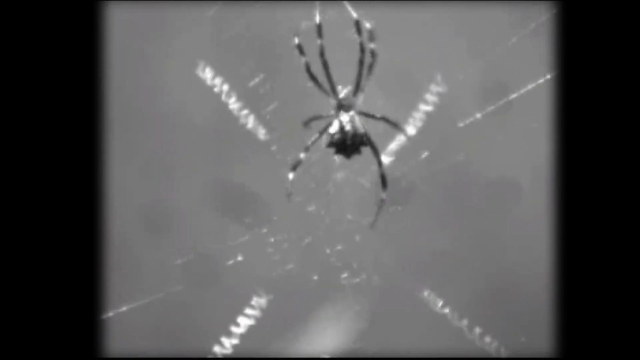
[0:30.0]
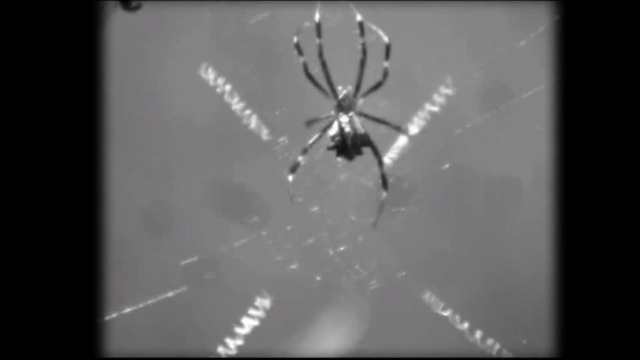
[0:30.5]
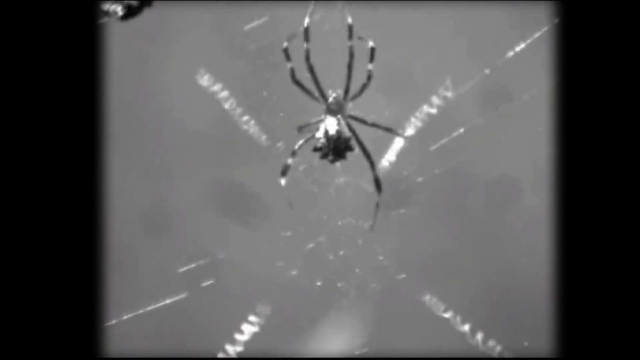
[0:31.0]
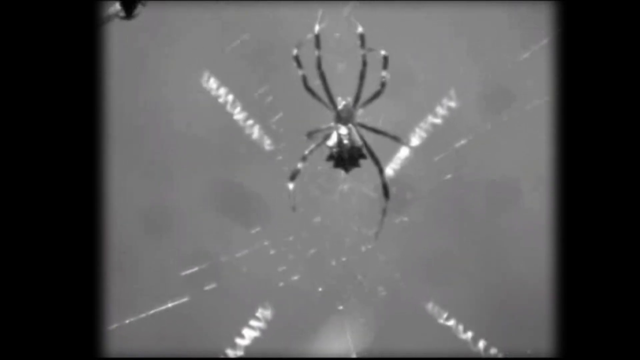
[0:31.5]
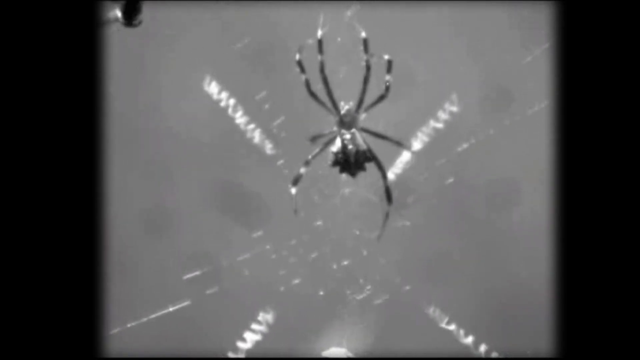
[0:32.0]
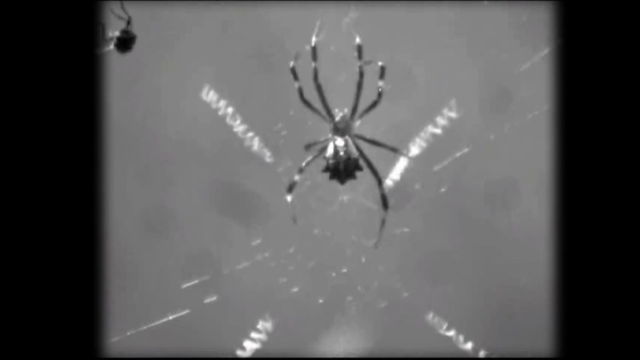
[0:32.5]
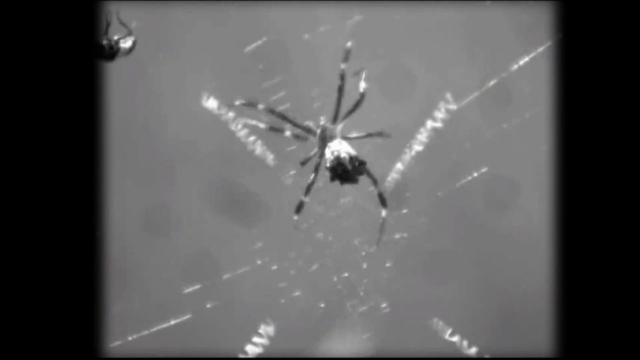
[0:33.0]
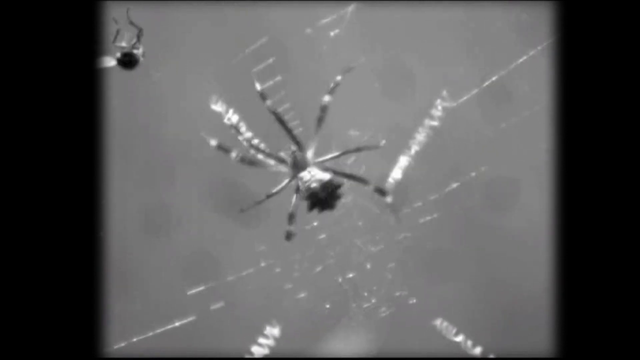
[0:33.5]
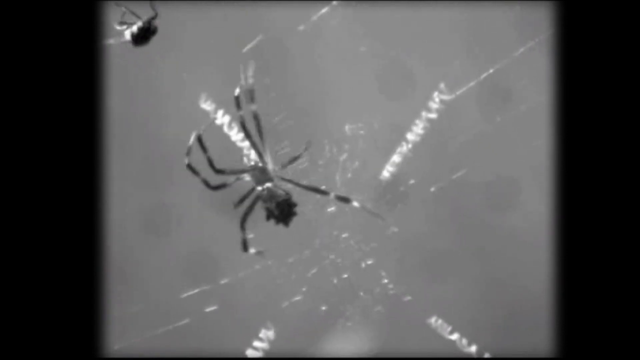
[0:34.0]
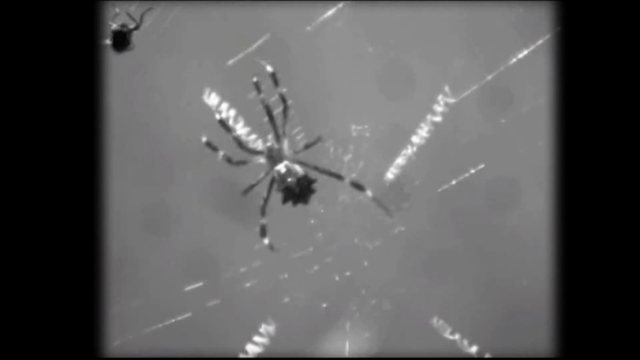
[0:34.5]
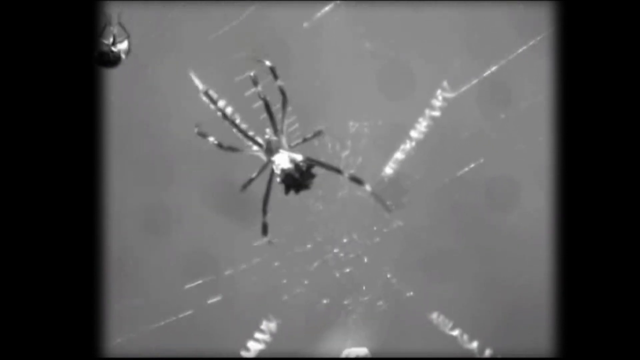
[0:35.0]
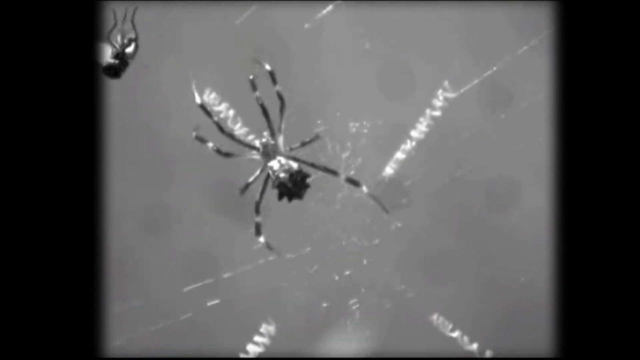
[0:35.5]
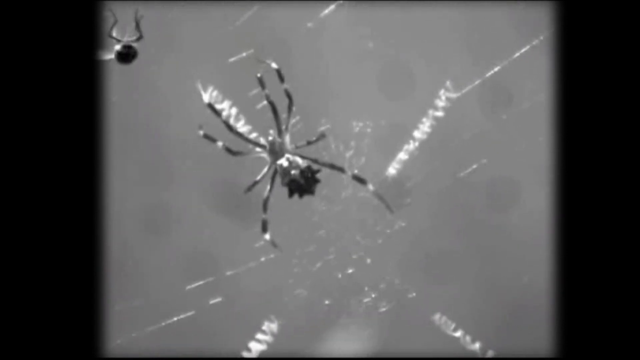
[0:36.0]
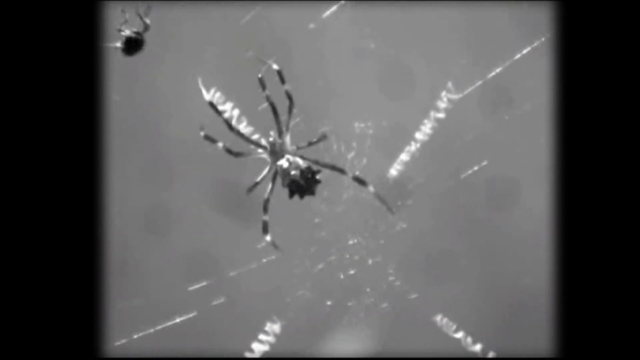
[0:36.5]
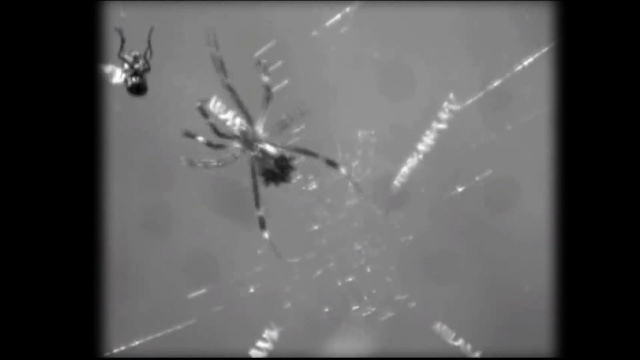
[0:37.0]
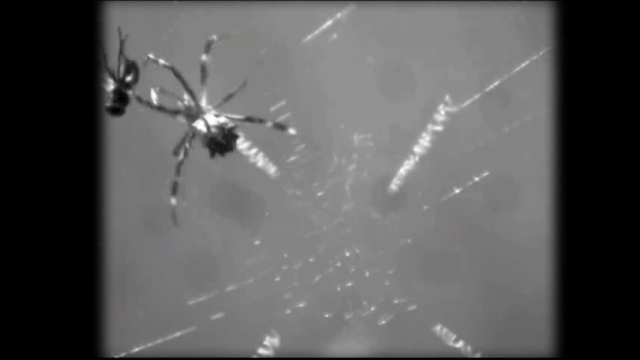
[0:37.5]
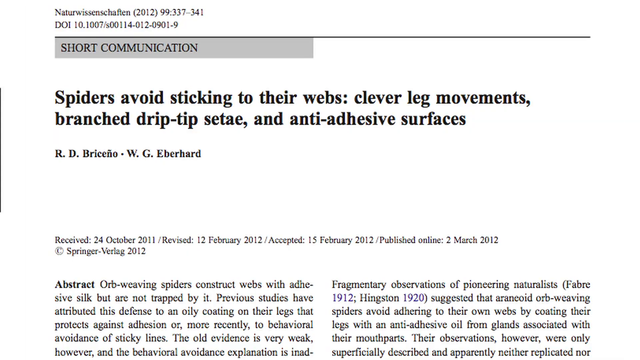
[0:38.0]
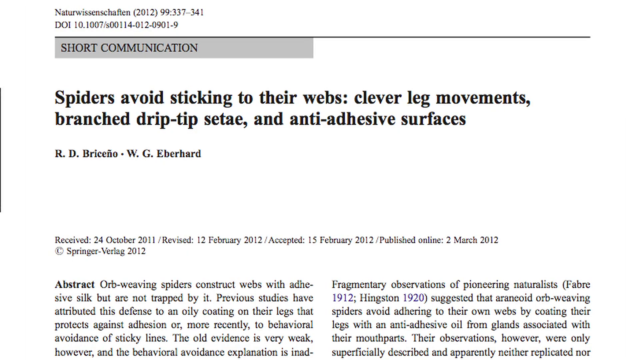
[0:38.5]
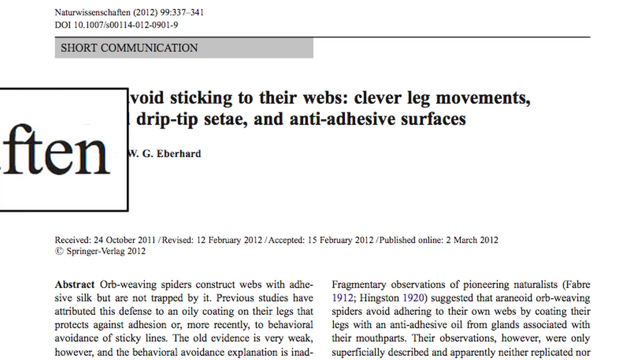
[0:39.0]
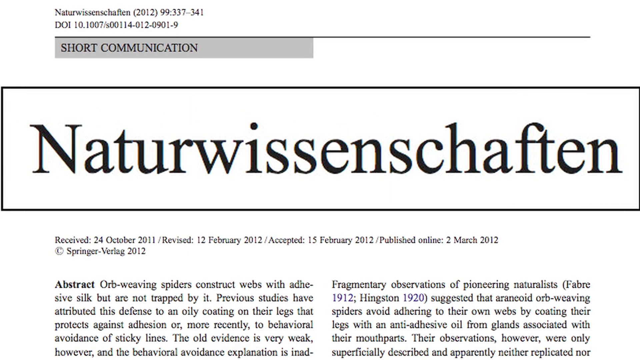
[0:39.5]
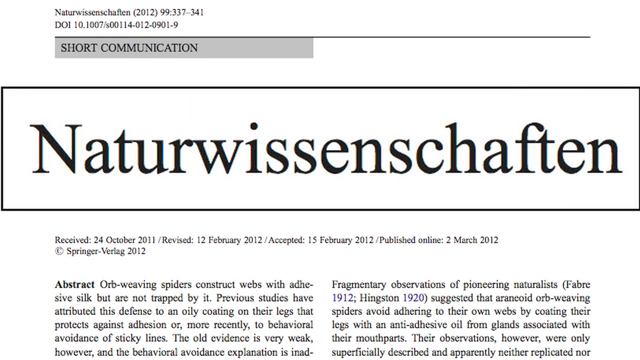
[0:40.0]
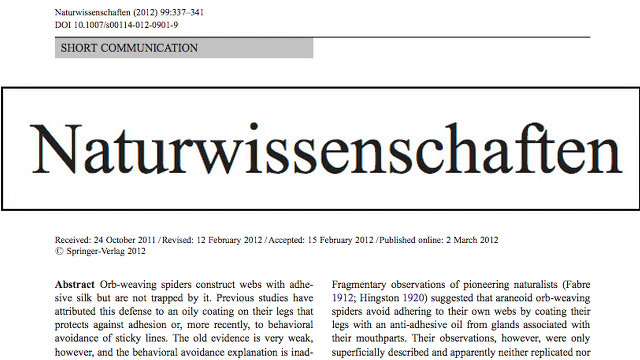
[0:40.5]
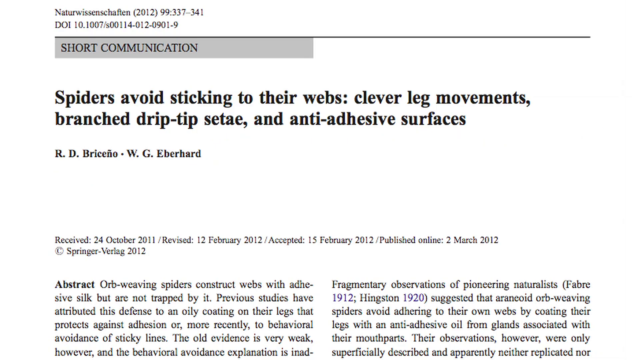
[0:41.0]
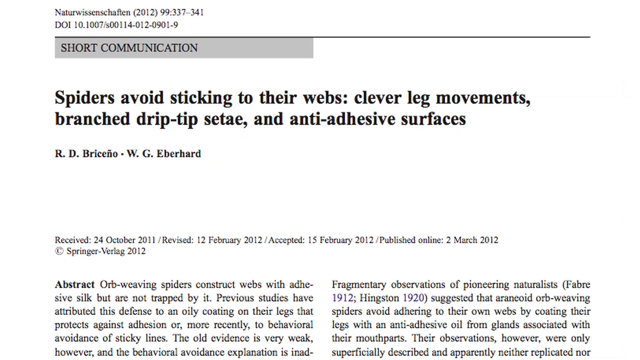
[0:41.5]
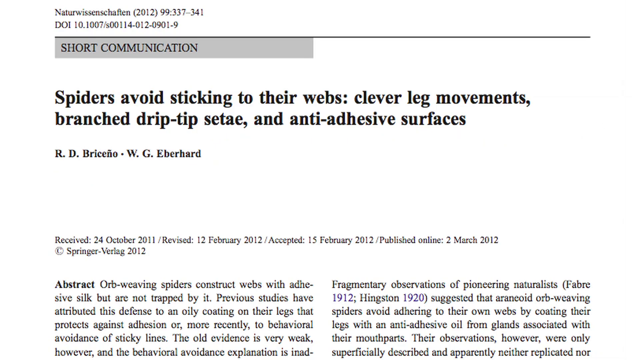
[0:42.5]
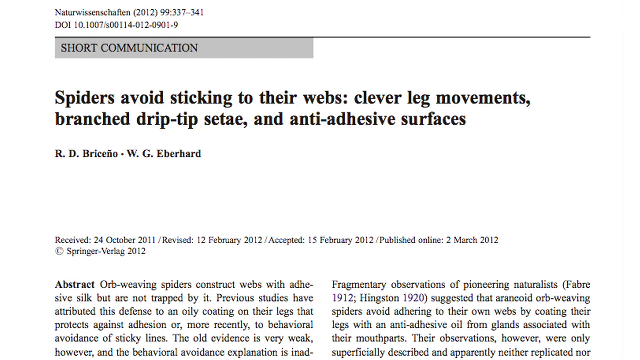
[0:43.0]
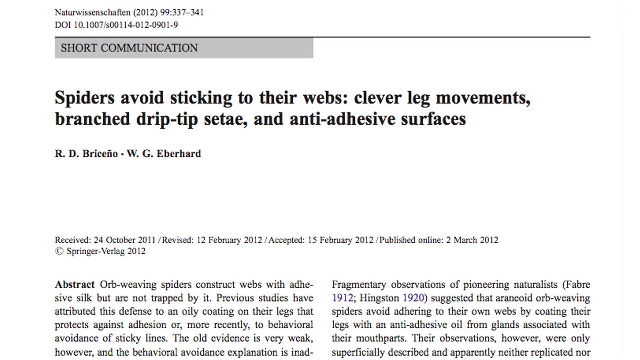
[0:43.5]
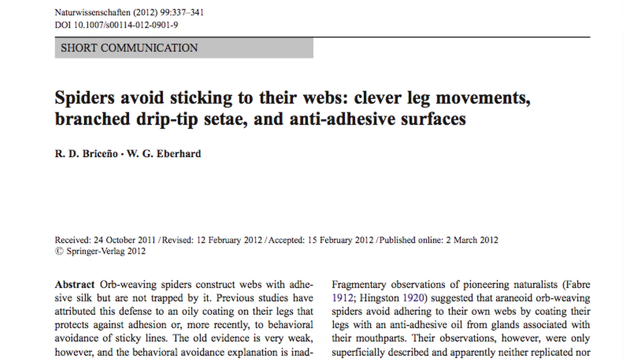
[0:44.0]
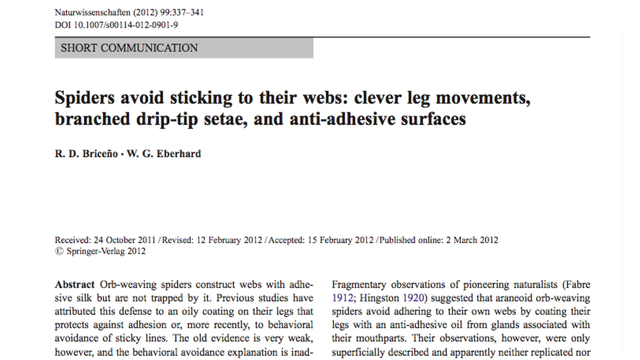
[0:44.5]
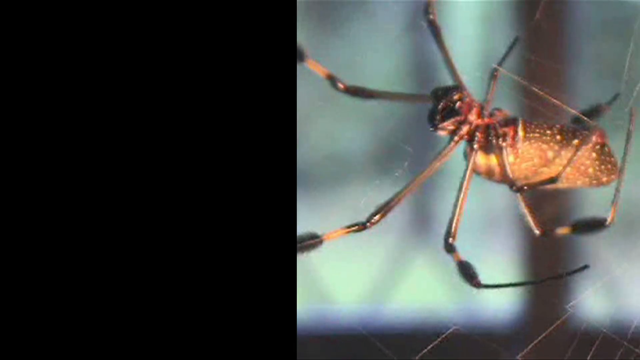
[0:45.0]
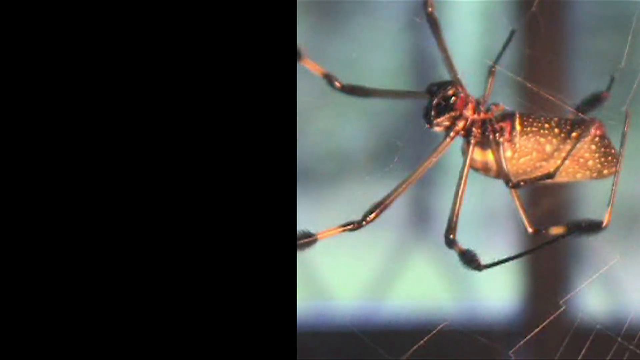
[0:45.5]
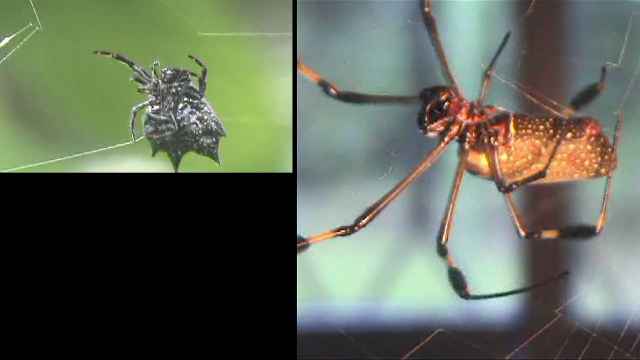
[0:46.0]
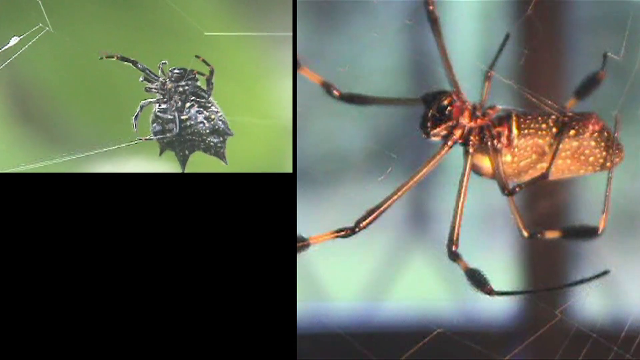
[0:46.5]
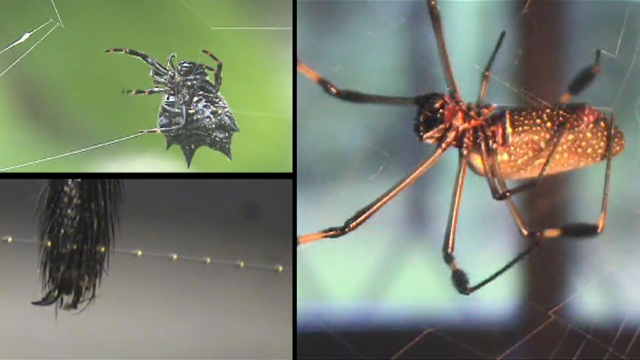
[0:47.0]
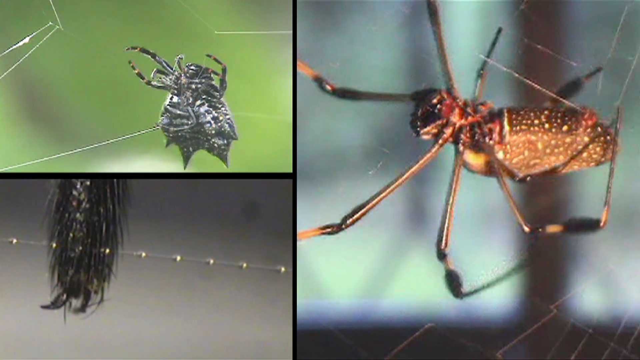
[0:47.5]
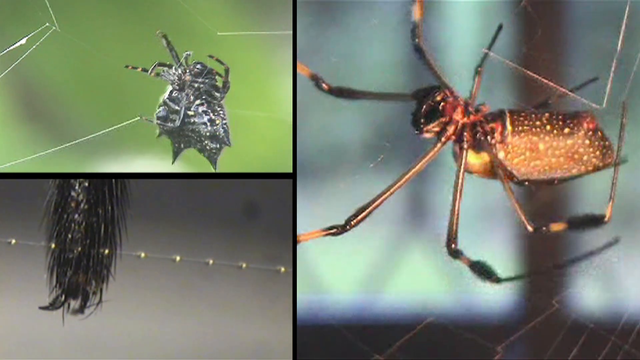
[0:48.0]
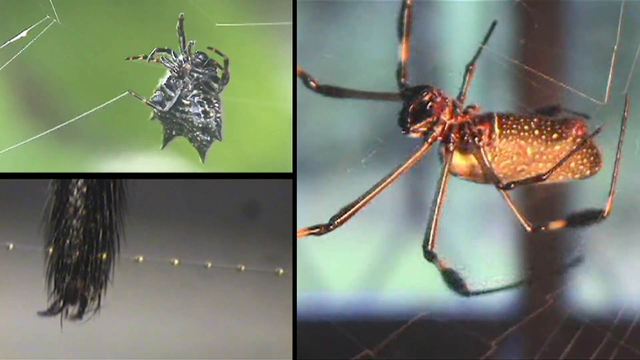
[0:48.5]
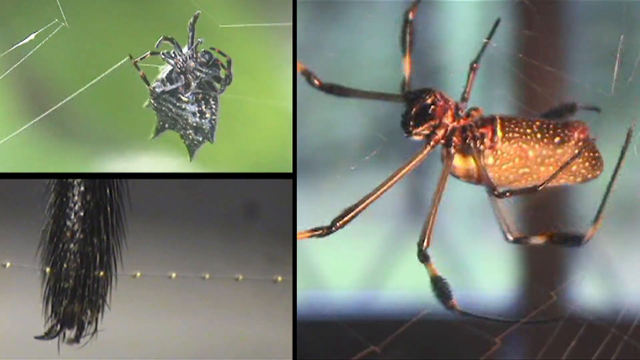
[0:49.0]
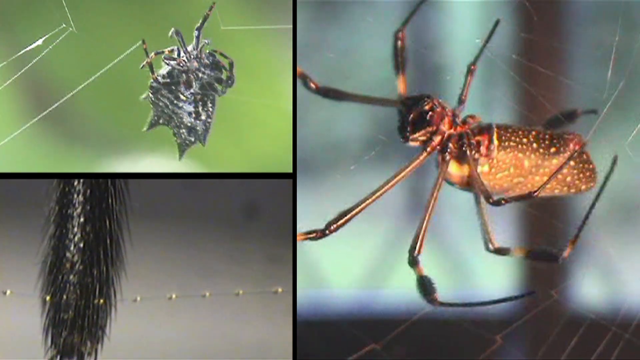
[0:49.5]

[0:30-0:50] Black-and-white footage shows a spider on a web. In the upper left-hand corner a fly has been caught and is trapped in the web, and the spider quickly moves toward it. An article then pops up marked "short communication", with a title beginning "spiders avoid sticking to their webs clever leg movements", dated 2011. The article has paragraphs about how spiders can move on their web without sticking to it, and it shows spiders and how they move their legs so that they do not get stuck. A big word, "nature", comes up, and the year 2012 also appears alongside 2011.